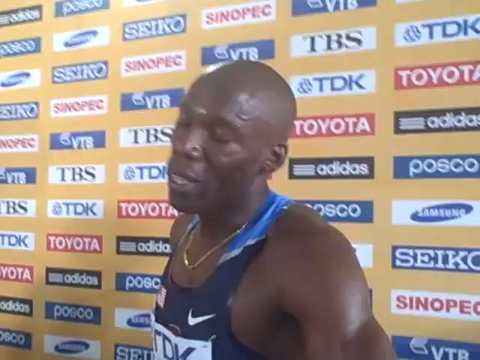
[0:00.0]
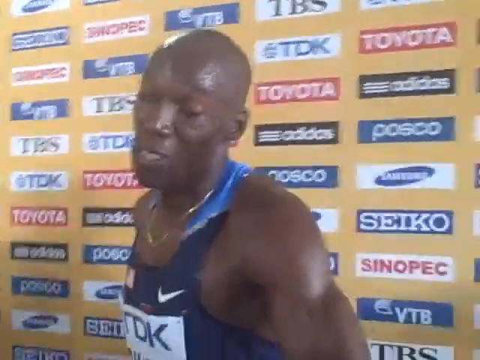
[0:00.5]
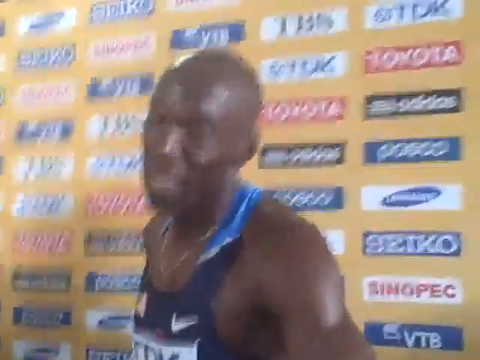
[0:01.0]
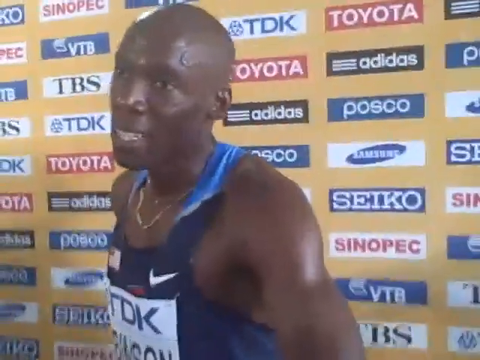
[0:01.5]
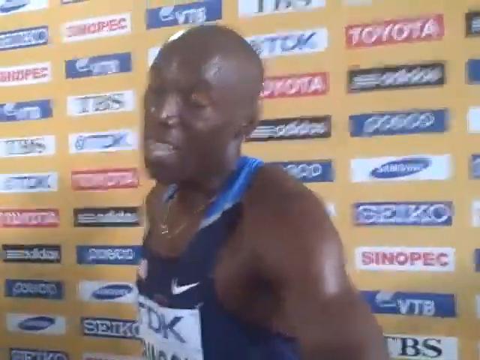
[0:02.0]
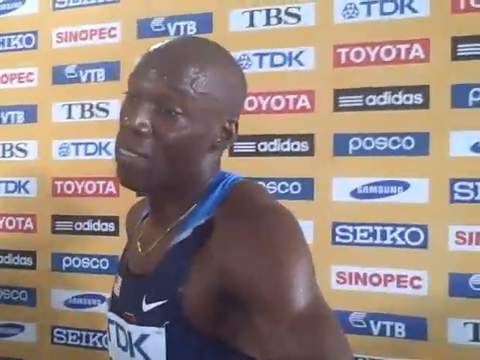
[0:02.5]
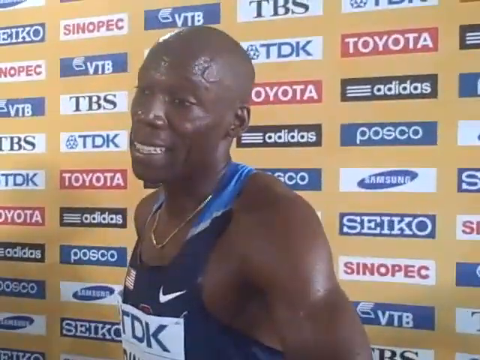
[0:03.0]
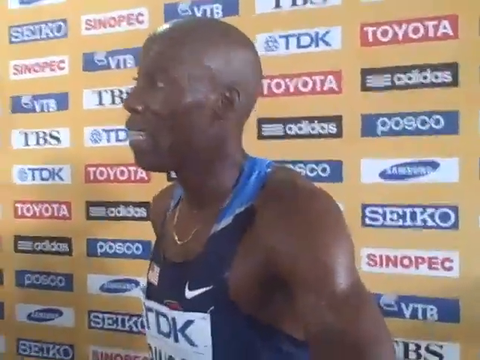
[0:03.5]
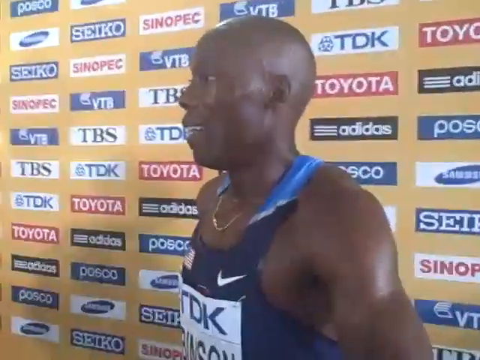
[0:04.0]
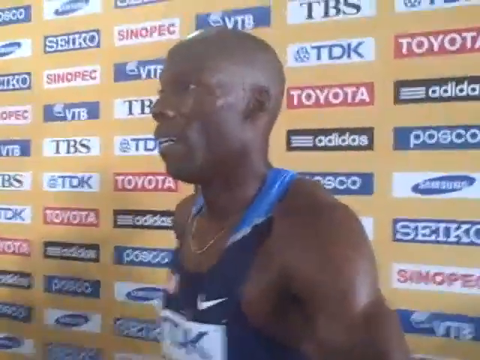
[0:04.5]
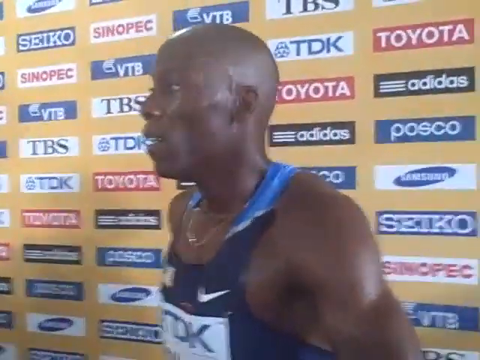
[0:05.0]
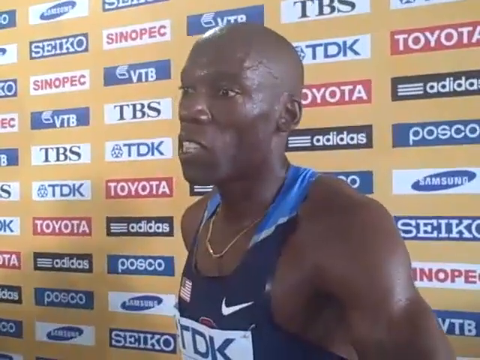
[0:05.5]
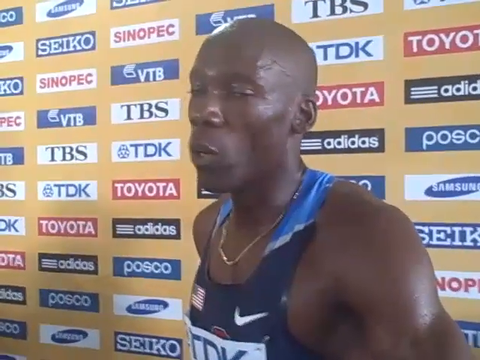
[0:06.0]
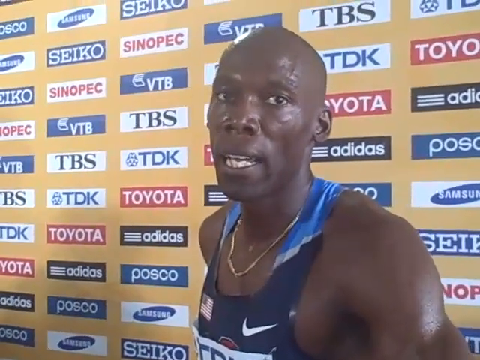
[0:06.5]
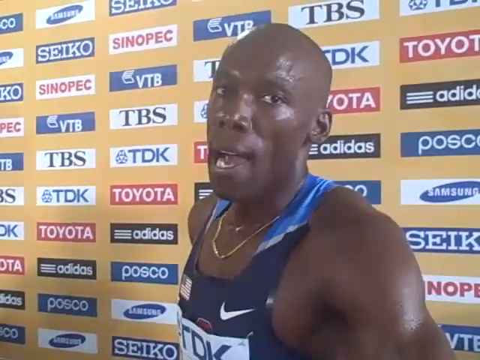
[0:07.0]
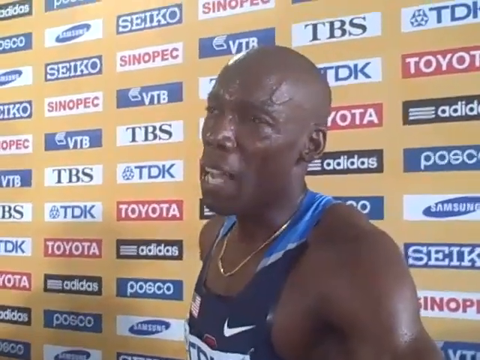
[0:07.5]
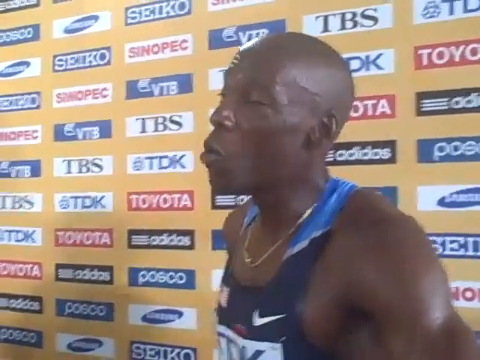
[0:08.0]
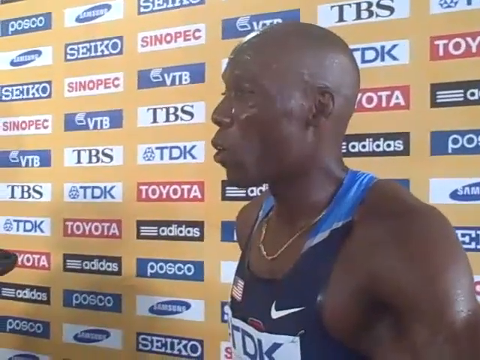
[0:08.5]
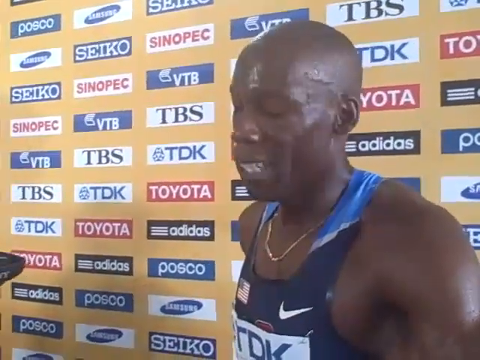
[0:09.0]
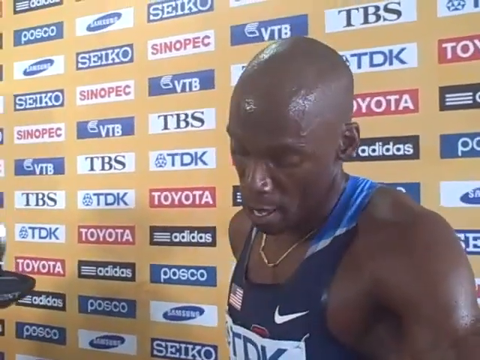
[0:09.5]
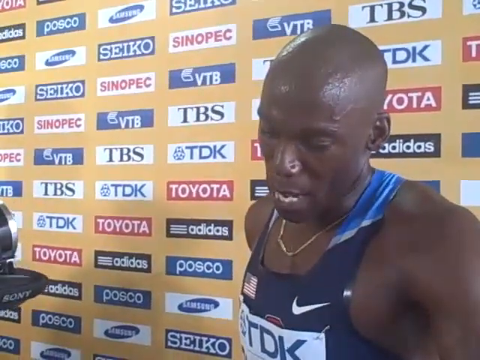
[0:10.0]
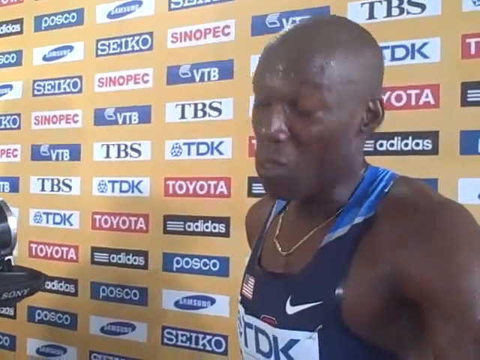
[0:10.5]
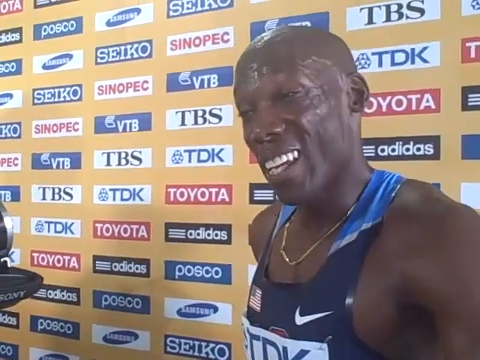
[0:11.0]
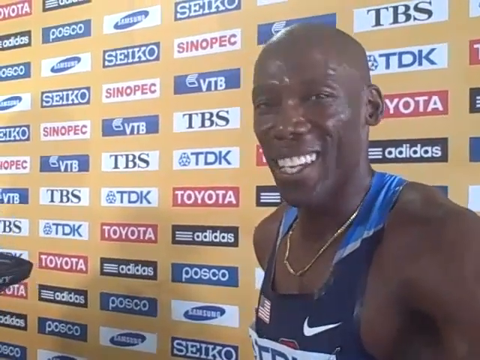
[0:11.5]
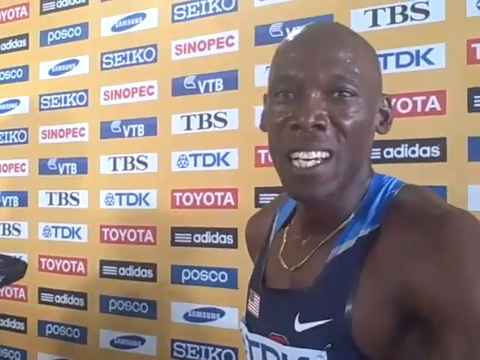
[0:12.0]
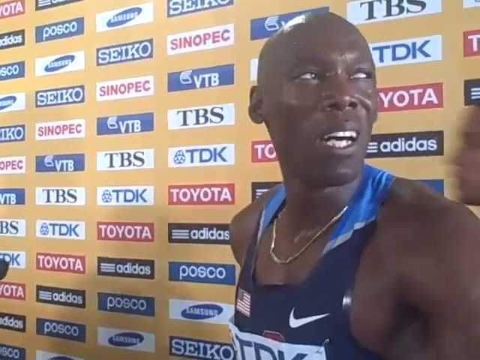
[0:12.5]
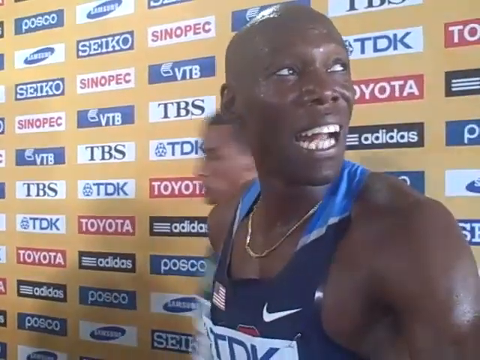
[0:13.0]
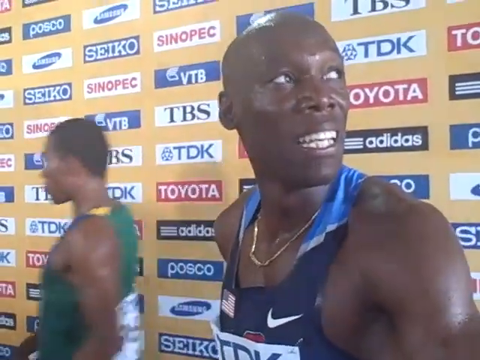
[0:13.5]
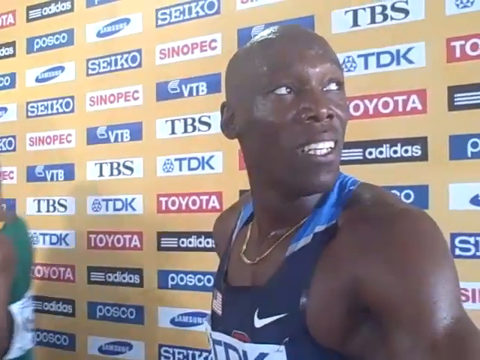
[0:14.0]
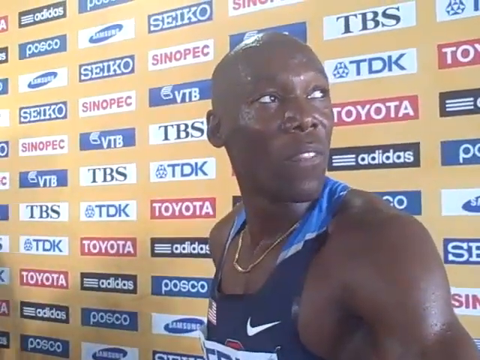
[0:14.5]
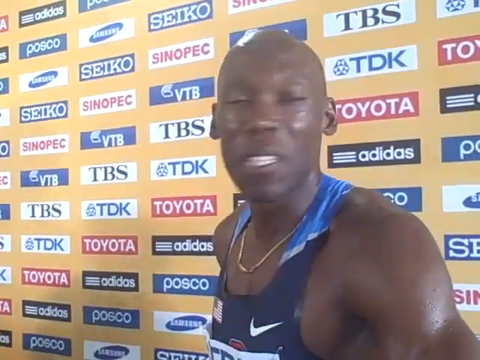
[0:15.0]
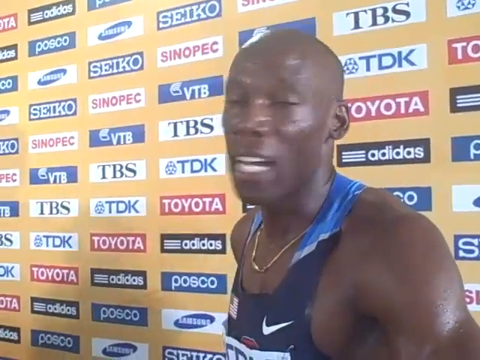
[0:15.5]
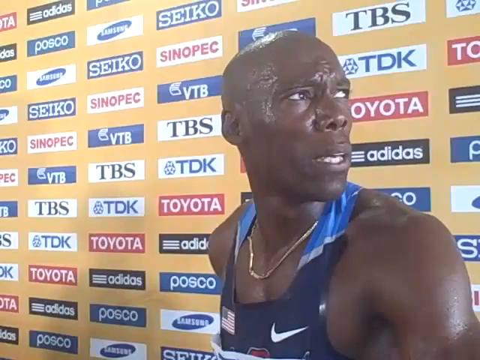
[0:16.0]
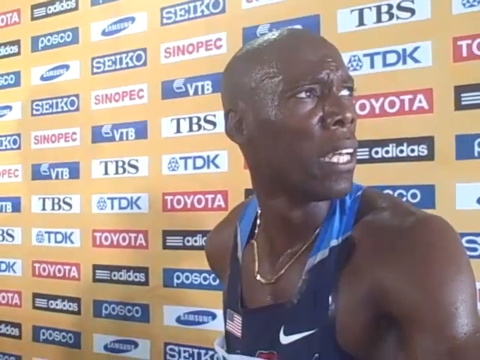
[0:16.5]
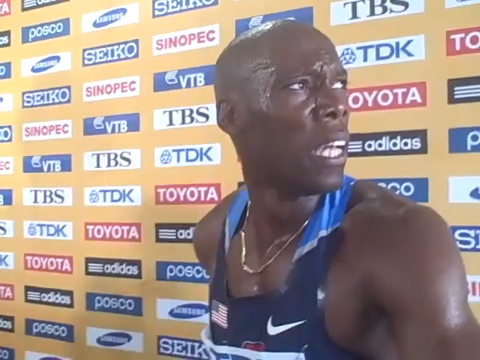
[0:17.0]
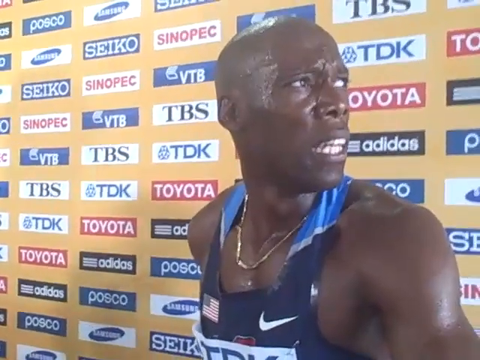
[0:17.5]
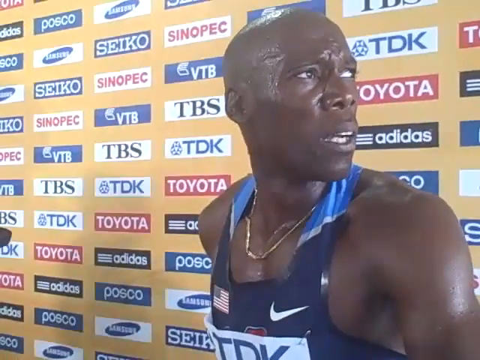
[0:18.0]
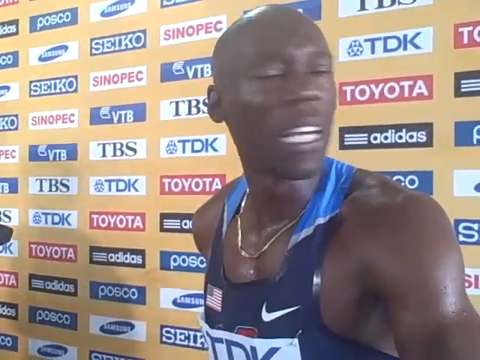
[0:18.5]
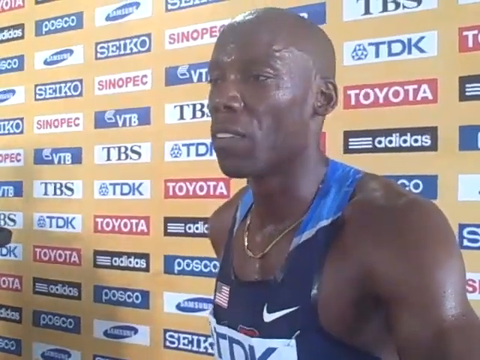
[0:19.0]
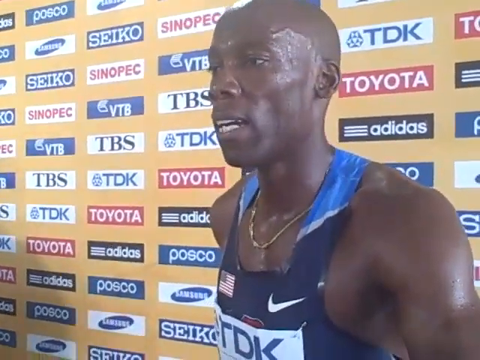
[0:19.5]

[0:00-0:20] A Black male athlete gives an interview somewhere. Behind him is a billboard, or possibly a painted wall, covered with sponsors, including adidas, toyota, posco, samsung, tbs and seiko. At the beginning the camera is pretty shaky. The man looks to be in his 30s or 40s and looks really sweaty; he has no hair, and sweat is visible on his forehead and face. He wears a blue tank top with a Nike logo and a USA logo, and a gold chain necklace. He faces to his right side as he talks. He first faces the person asking the question, then looks towards the camera, and then looks to his left side, away from the camera, for a little bit; at that moment someone in green walks past behind him, from his left to his right.